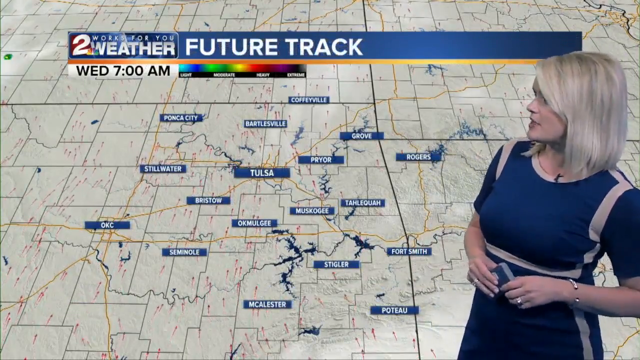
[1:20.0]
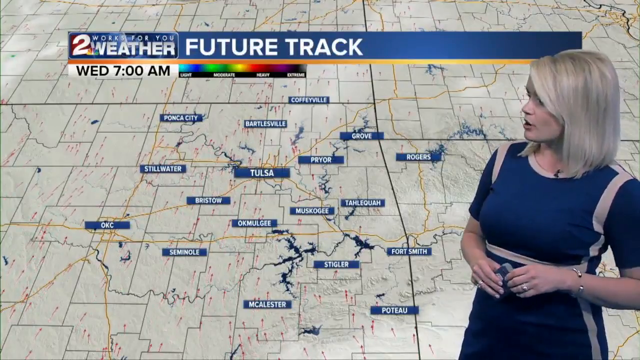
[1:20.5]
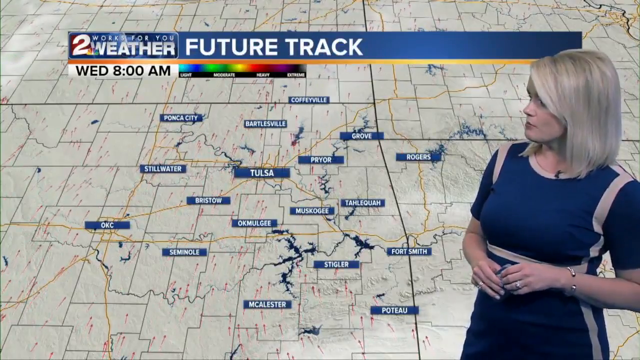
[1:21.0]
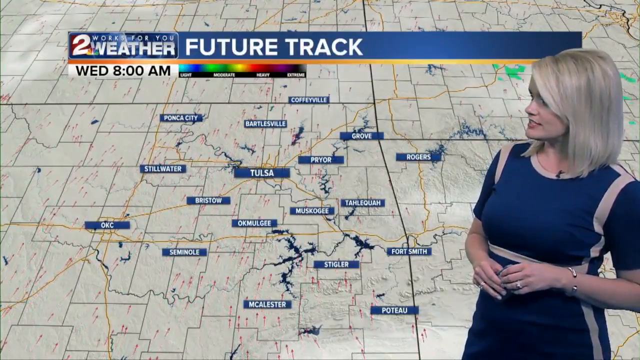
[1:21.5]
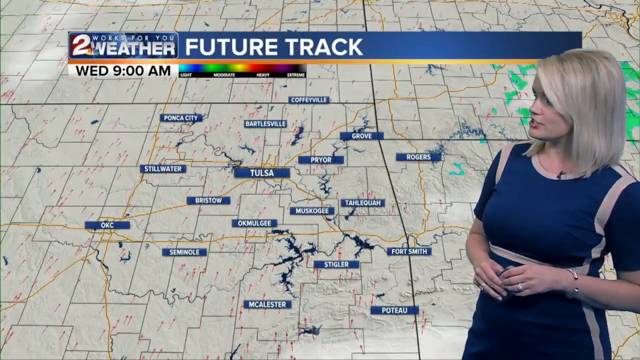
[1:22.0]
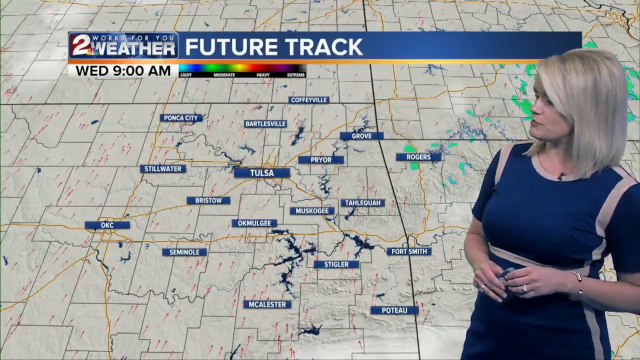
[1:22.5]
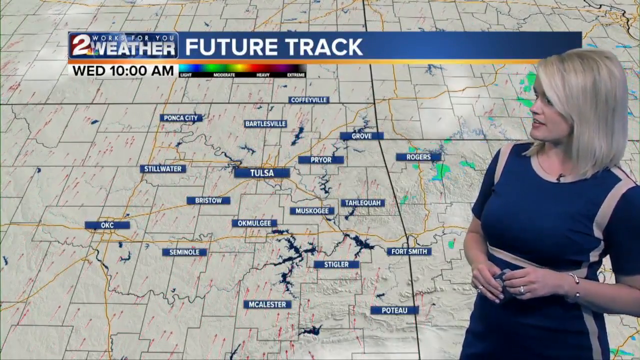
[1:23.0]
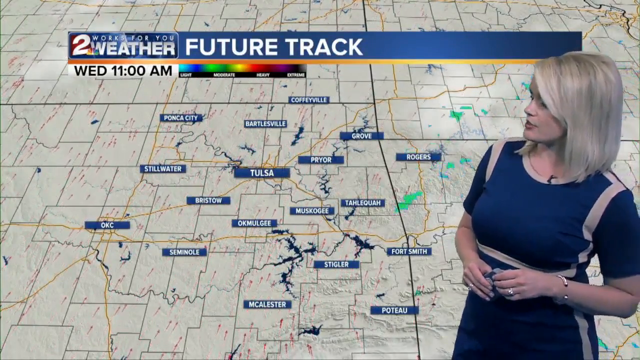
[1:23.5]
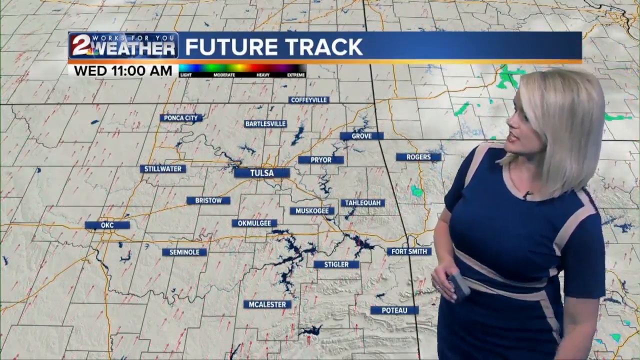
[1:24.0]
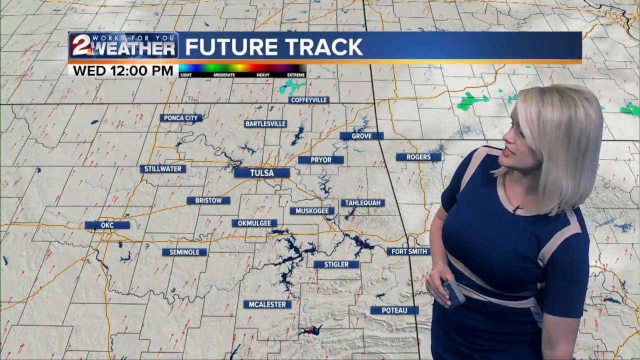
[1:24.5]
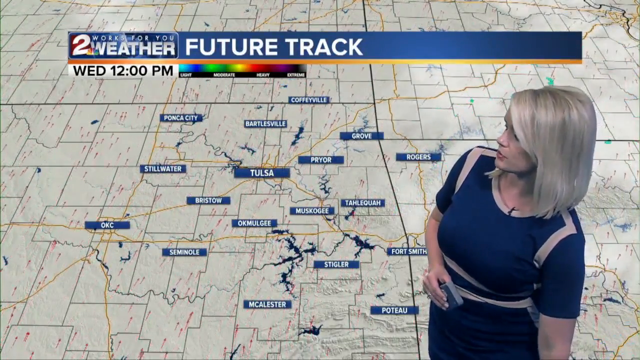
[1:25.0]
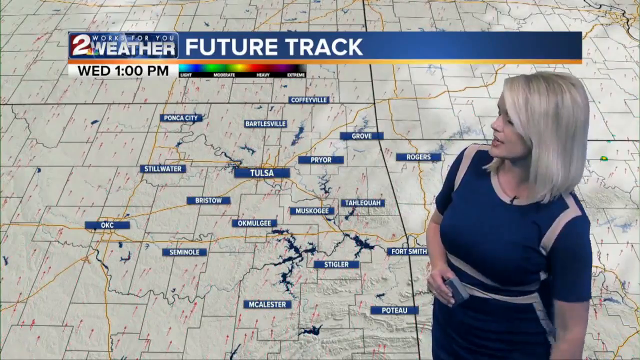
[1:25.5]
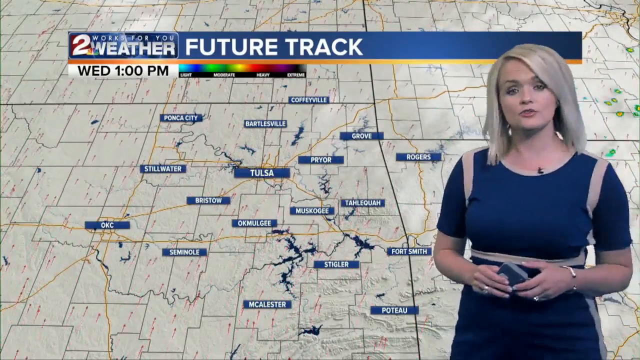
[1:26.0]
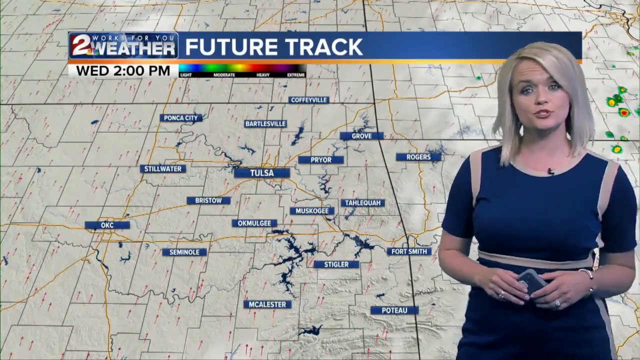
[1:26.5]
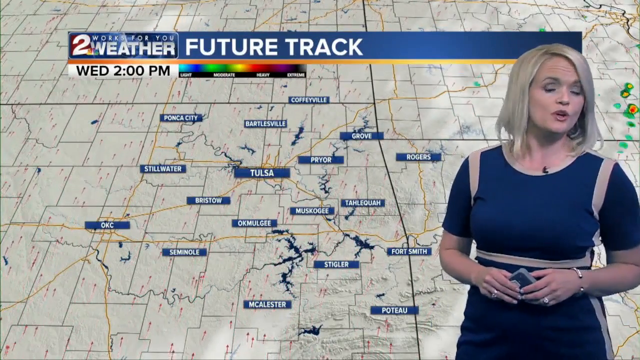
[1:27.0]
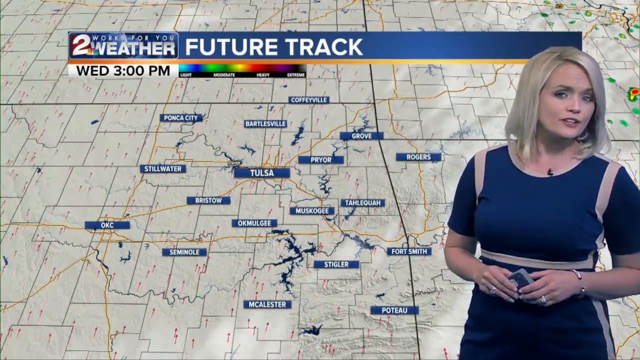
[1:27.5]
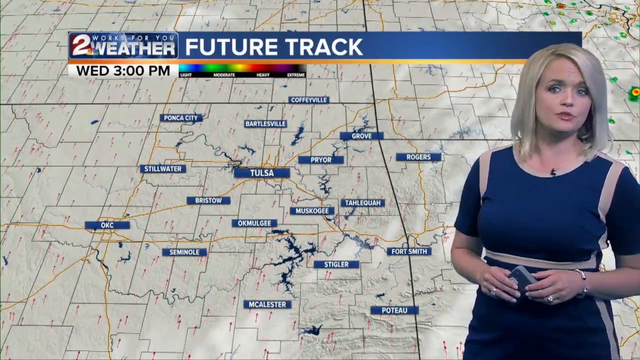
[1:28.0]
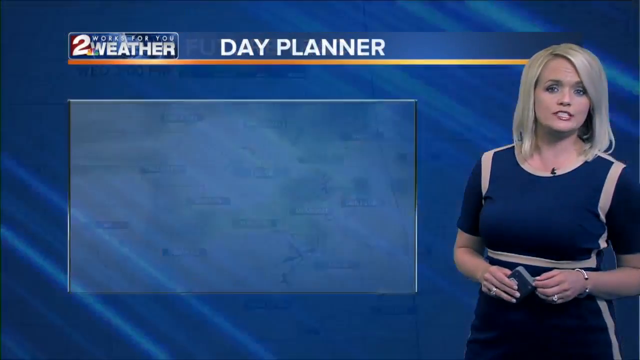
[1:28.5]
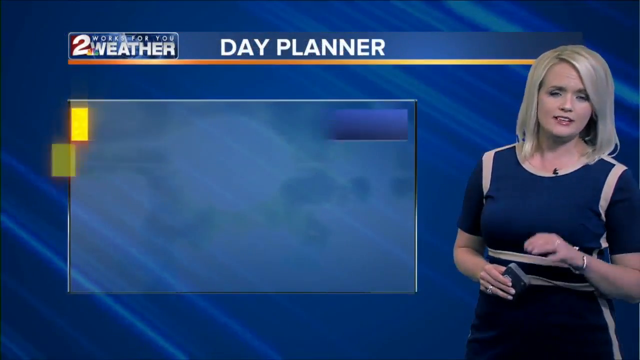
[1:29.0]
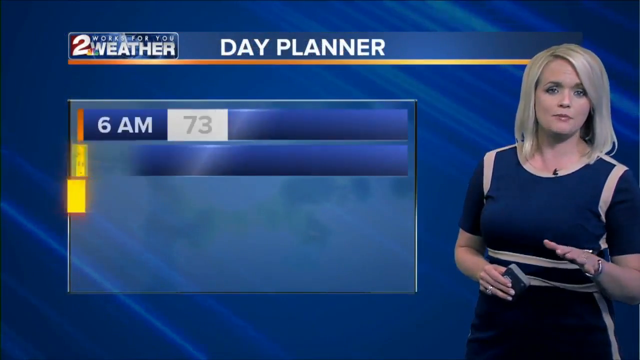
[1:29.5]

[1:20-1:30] The map behind the weather anchor is zoomed in on Oklahoma. She stands on the right of the screen, with straight, shoulder-length blonde hair and a blue dress with tan stripes around the shoulders and waist. The graphic at the top reads "future track," and she looks over at the screen, which apparently shows moisture moving into the area. She switches to a new graphic reading "Day Planner," with a dark blue background and a blue box over it showing the day starting at 6 a.m., with the temperature and the sunrise.